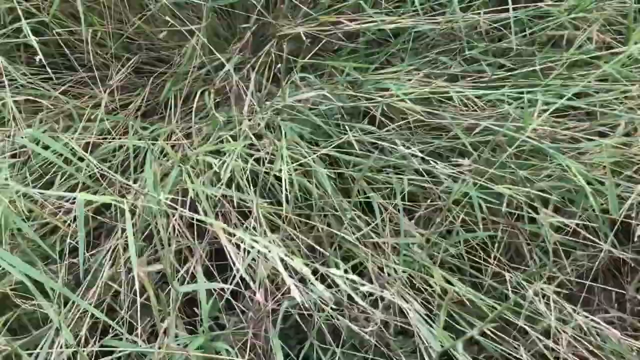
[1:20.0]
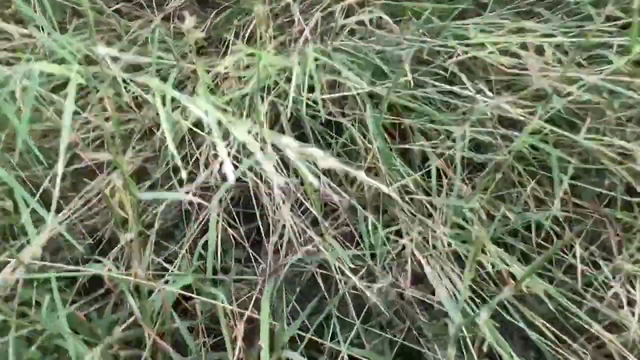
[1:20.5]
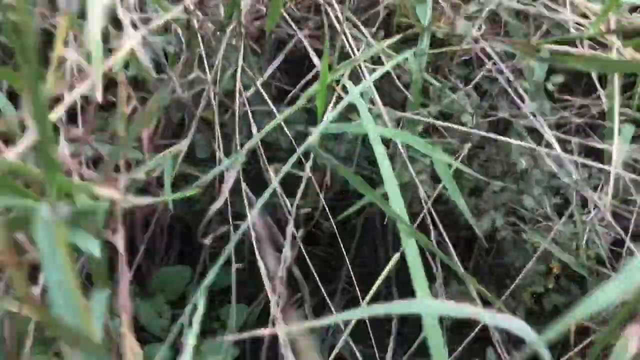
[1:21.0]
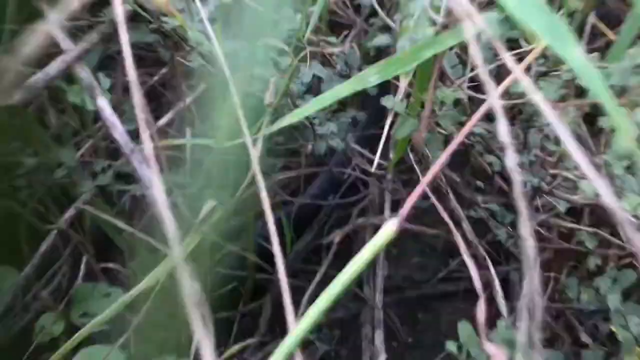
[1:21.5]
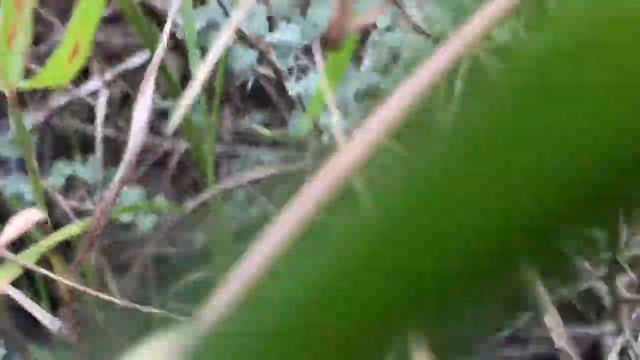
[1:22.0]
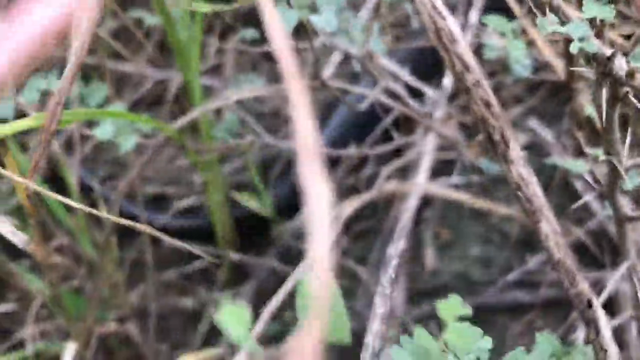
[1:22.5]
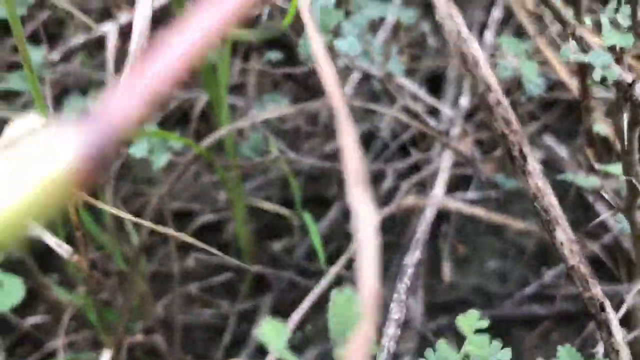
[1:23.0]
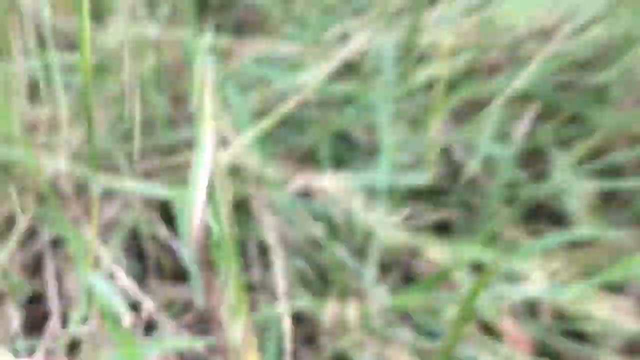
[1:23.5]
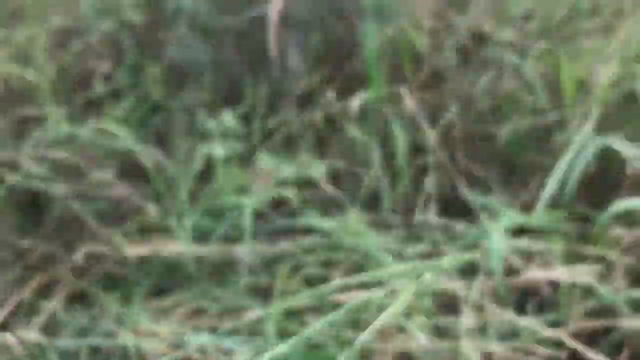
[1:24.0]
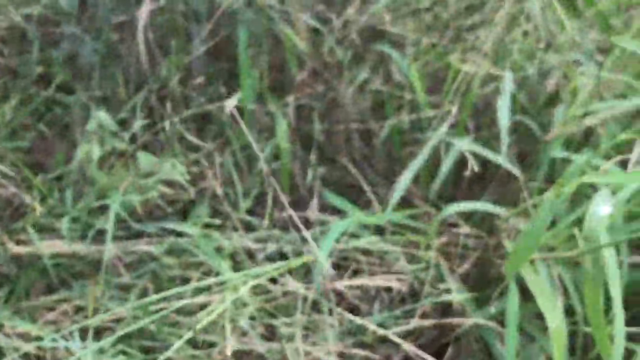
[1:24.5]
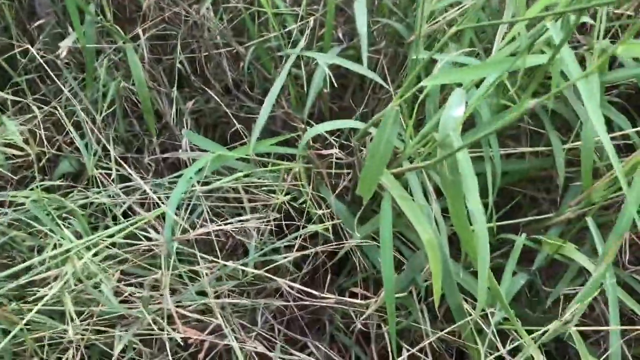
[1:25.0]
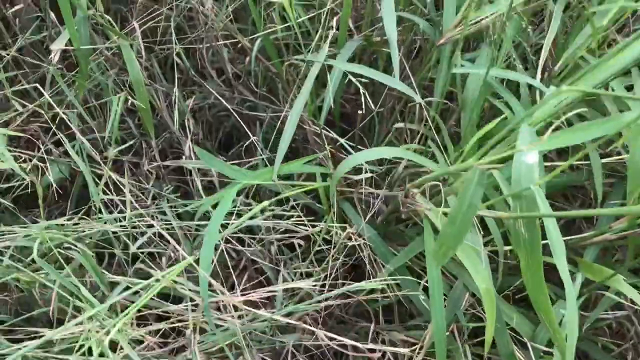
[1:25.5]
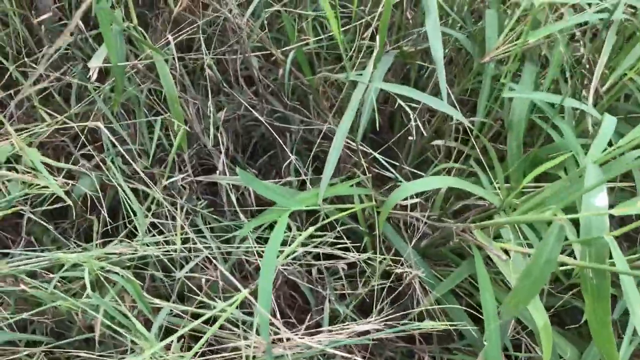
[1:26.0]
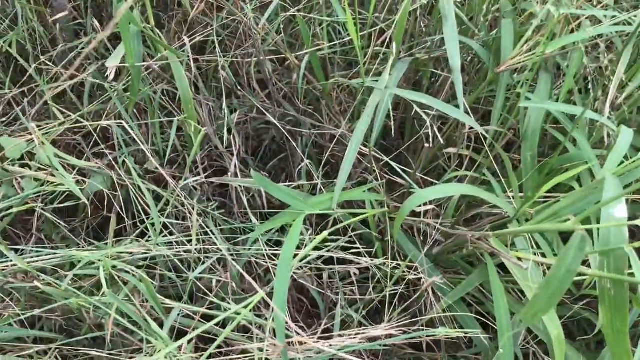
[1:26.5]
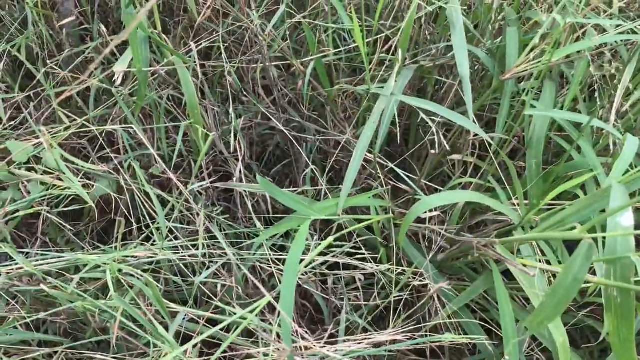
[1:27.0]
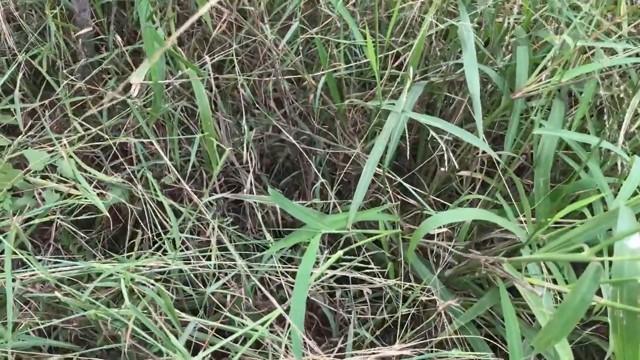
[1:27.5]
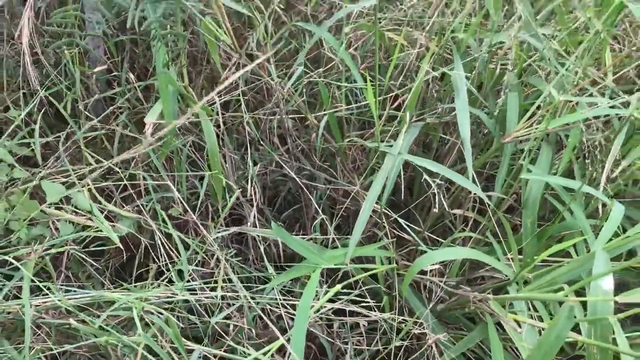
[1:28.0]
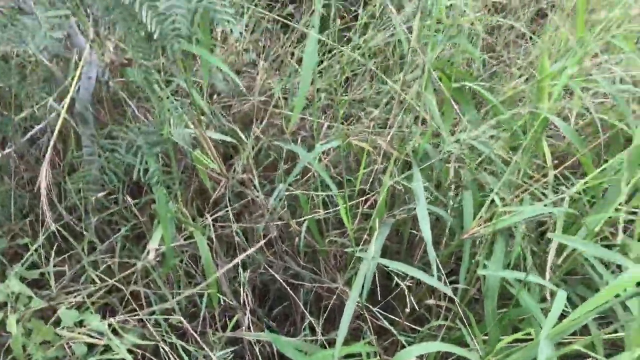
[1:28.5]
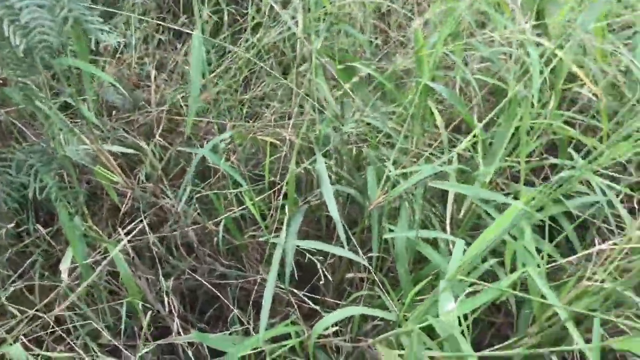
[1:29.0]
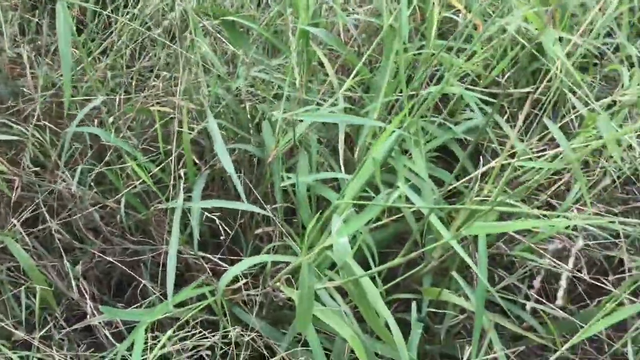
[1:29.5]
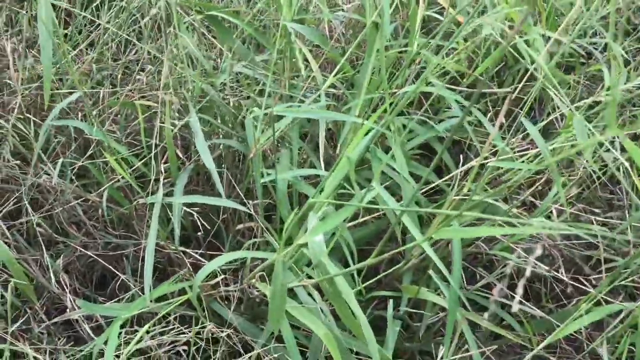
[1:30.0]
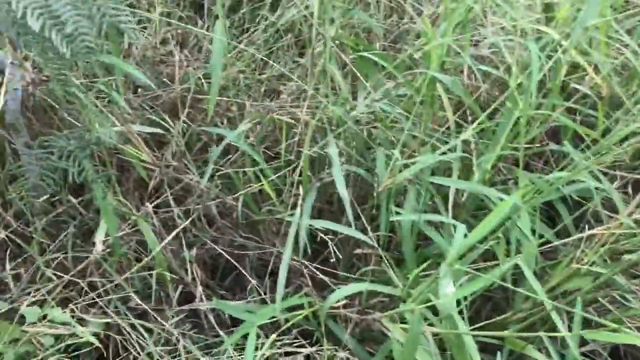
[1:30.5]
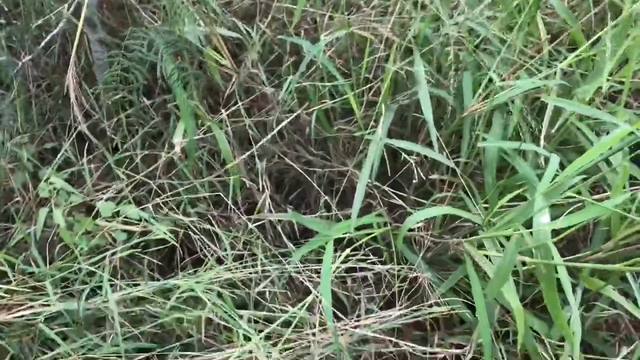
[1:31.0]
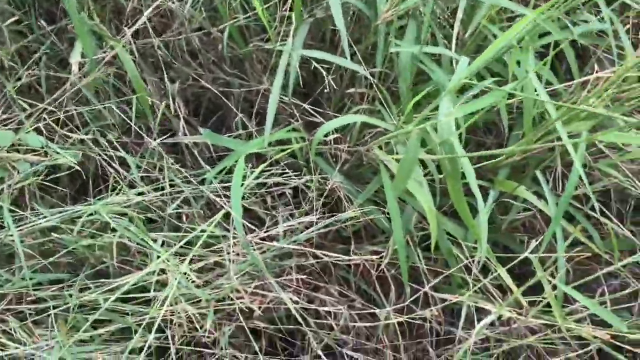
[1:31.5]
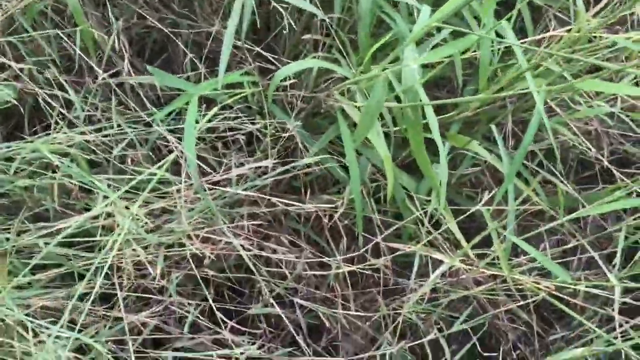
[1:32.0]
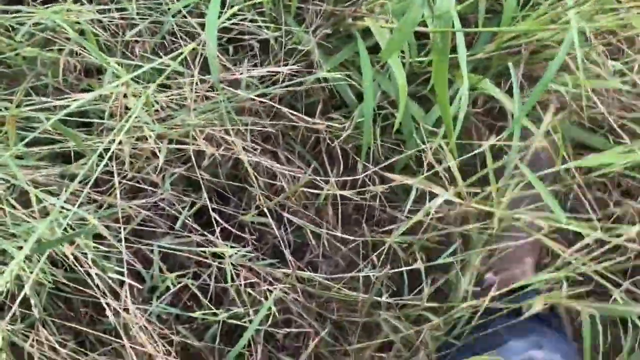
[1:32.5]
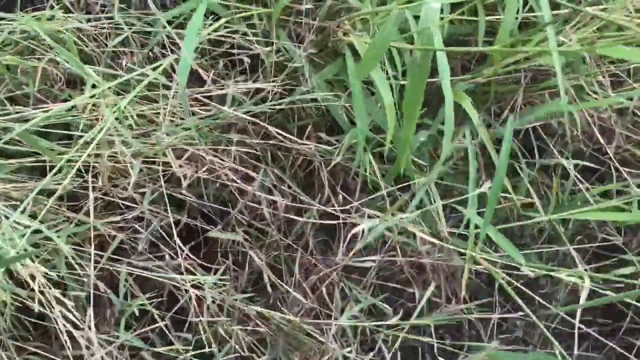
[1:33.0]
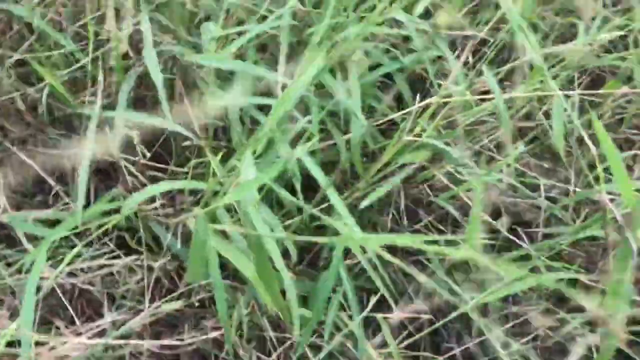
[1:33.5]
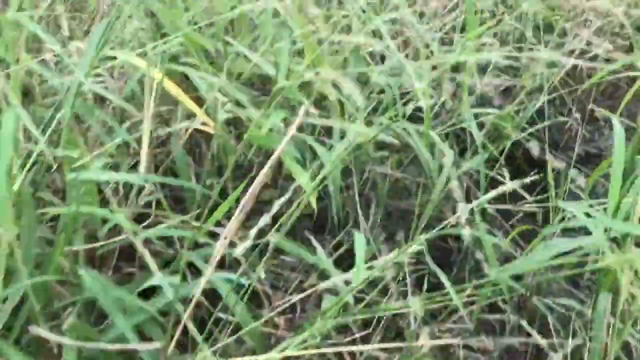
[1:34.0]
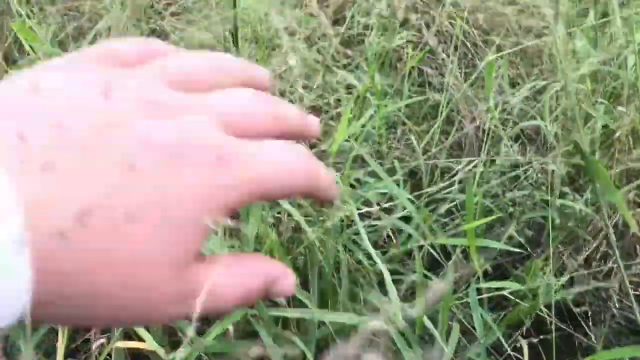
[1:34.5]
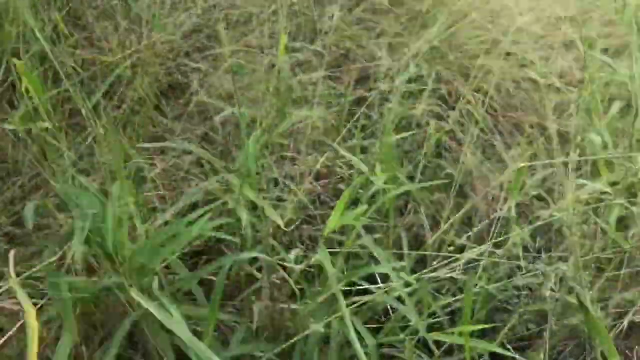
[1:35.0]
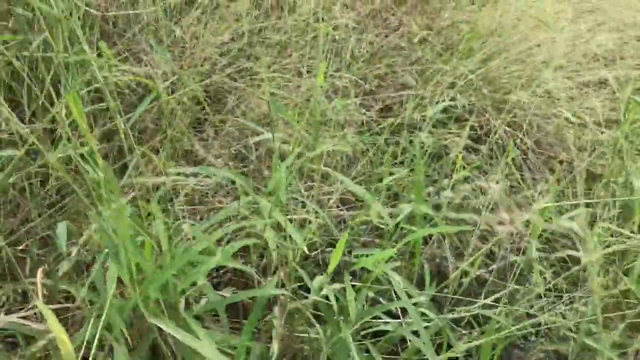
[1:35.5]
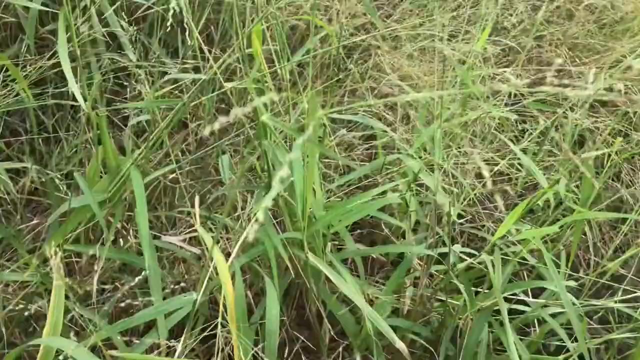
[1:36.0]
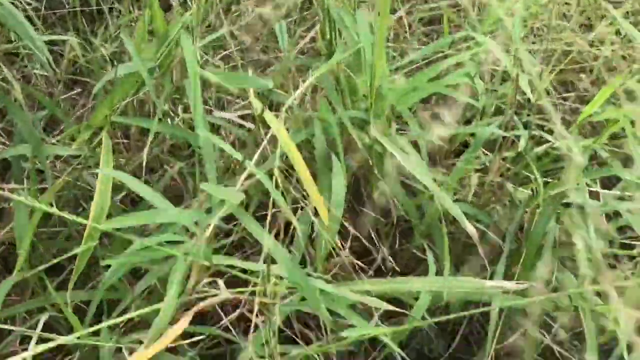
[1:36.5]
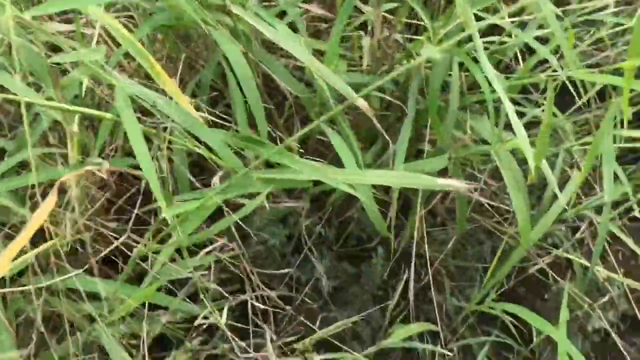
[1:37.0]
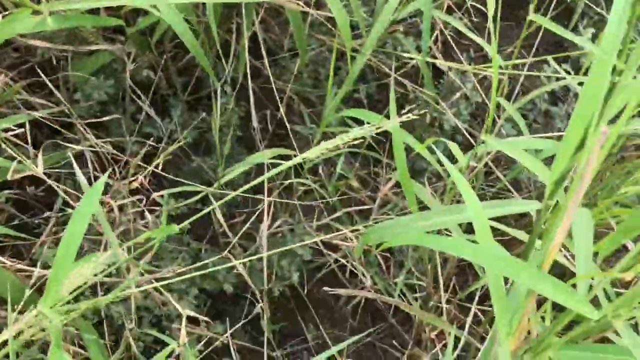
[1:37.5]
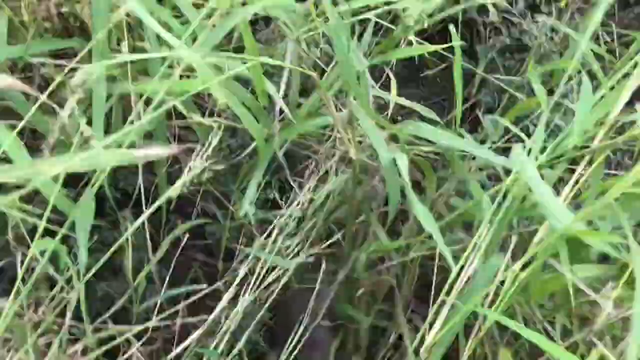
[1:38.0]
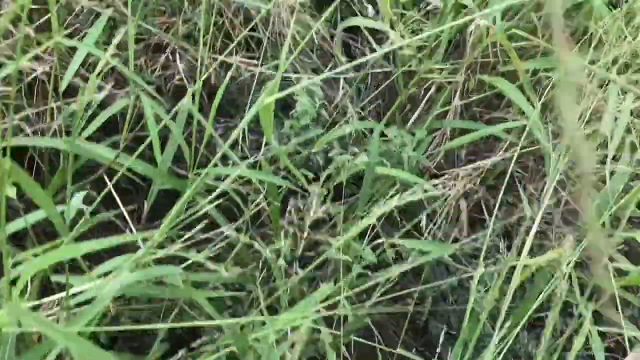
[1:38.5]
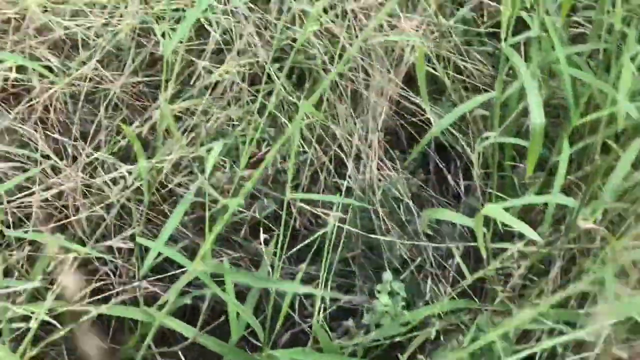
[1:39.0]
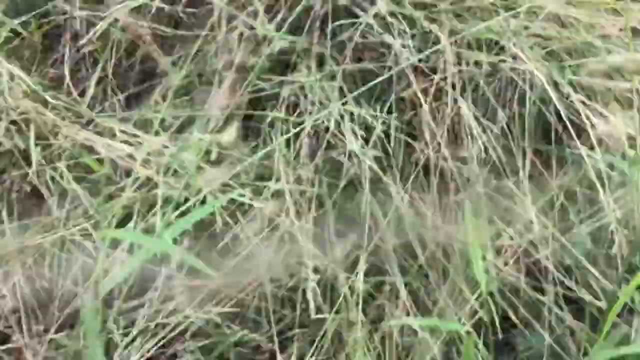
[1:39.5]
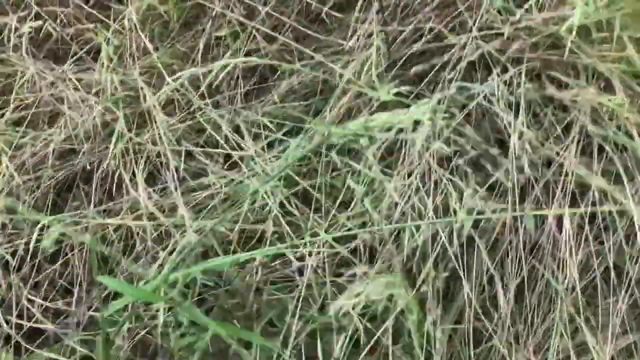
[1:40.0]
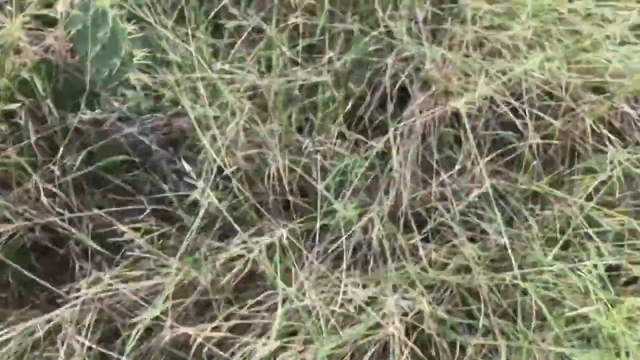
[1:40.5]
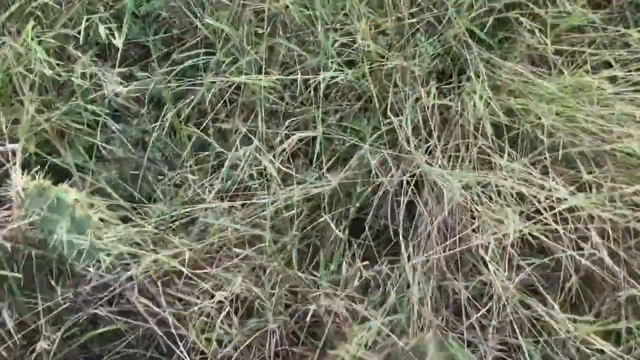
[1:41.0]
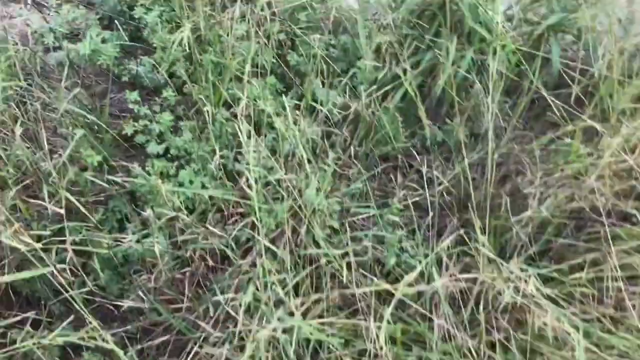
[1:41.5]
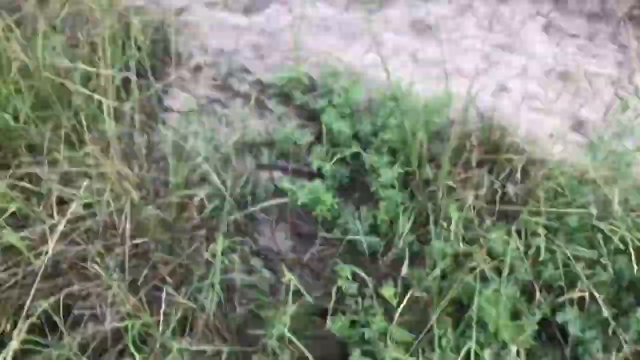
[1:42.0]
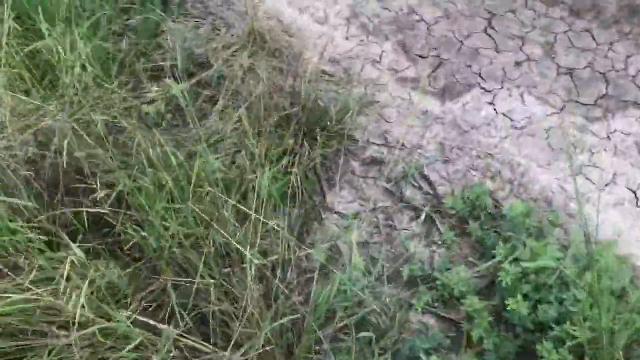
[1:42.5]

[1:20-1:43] The kid follows the snake through the grass and sneaks up on it again as it slithers off into tall grass, both dead and live, easily waist high and really thick. The grass is tall, green and gray, overgrown and thick. The snake is hard to see on camera, but the kid keeps track of it through the grass, apparently anticipating where it is going as much as seeing it.